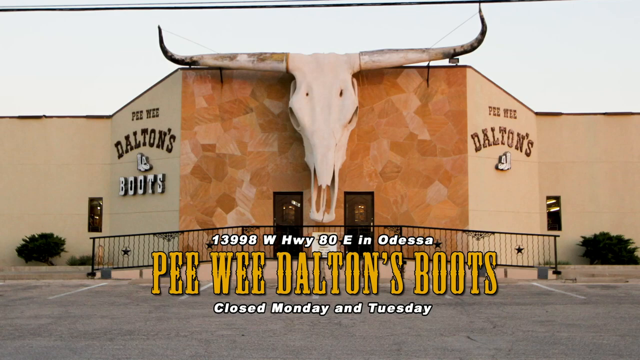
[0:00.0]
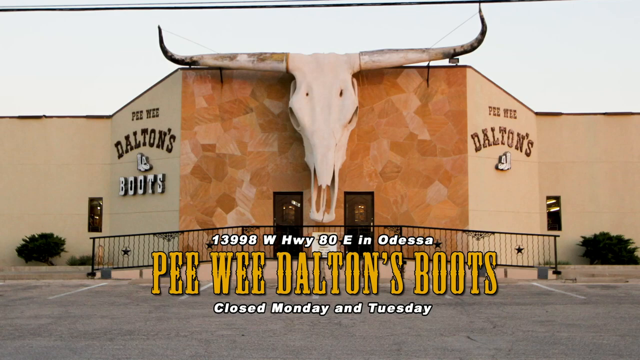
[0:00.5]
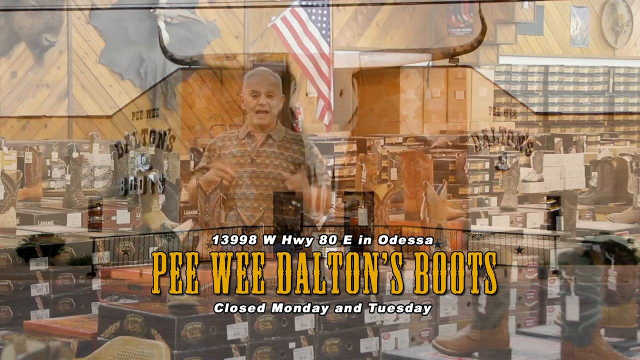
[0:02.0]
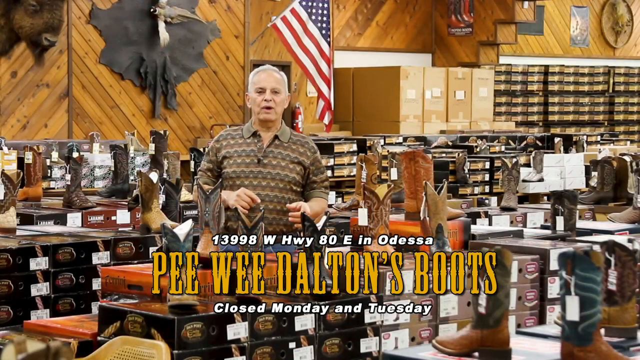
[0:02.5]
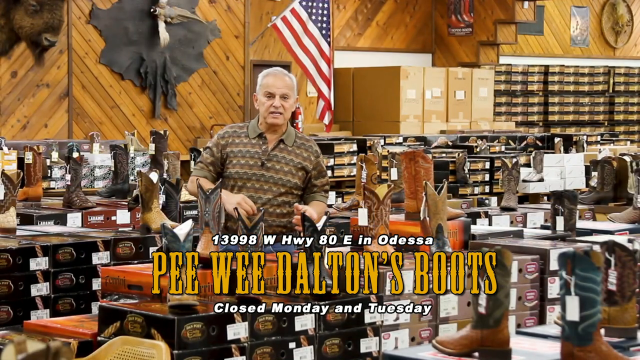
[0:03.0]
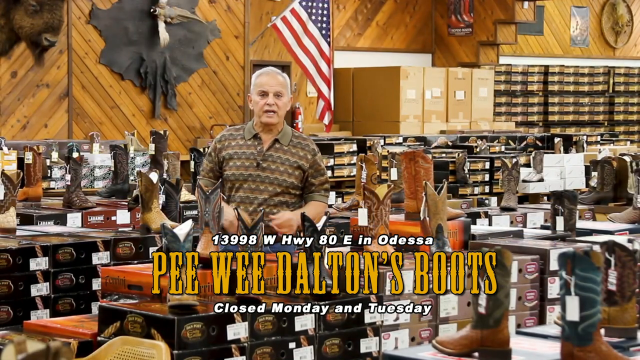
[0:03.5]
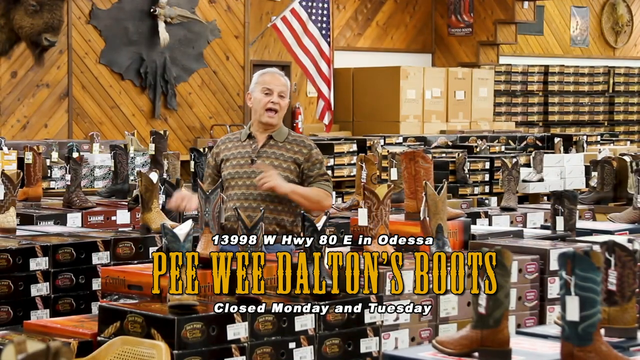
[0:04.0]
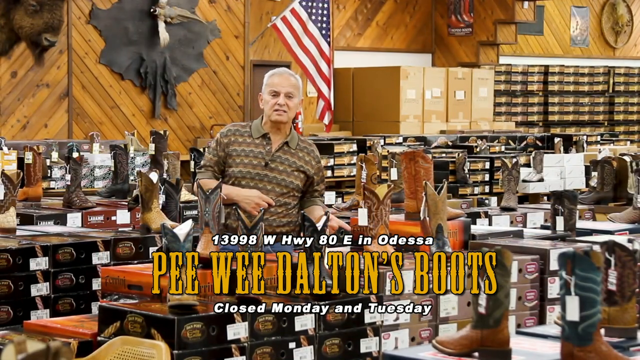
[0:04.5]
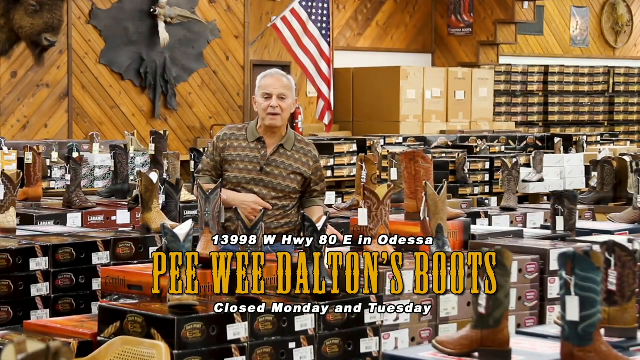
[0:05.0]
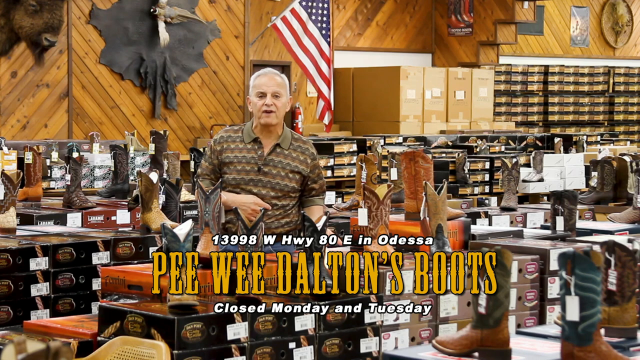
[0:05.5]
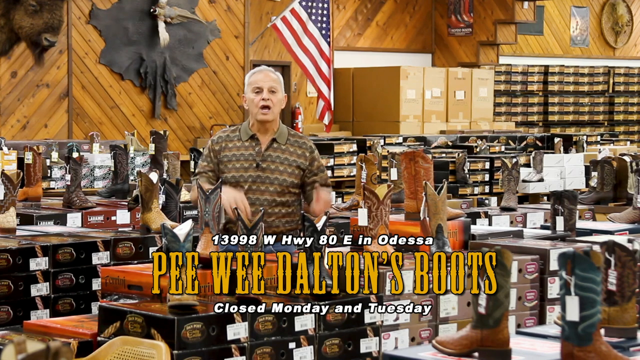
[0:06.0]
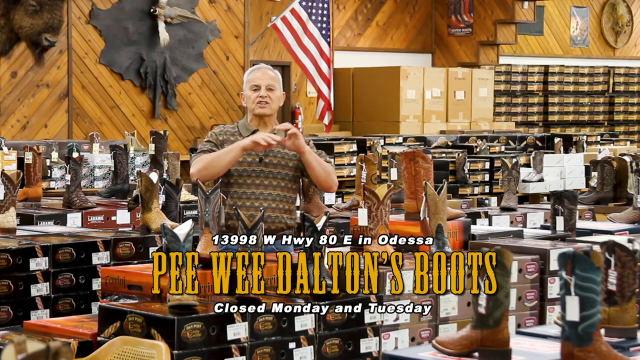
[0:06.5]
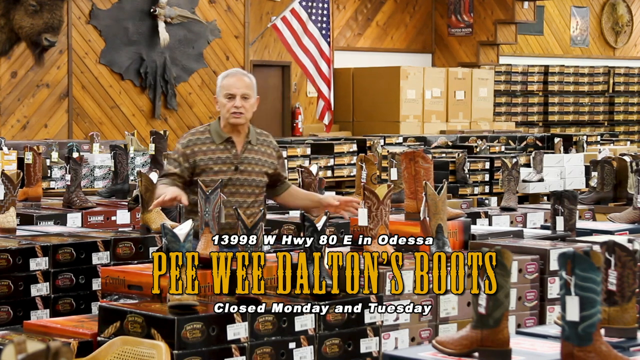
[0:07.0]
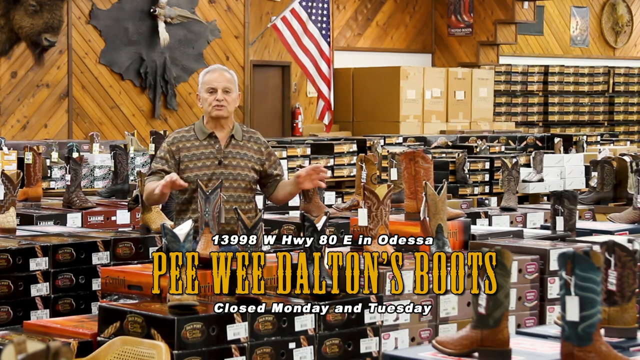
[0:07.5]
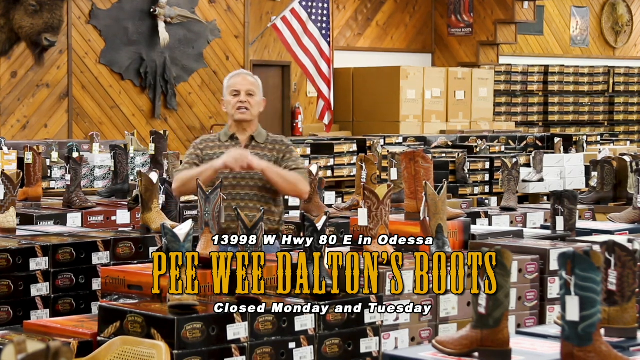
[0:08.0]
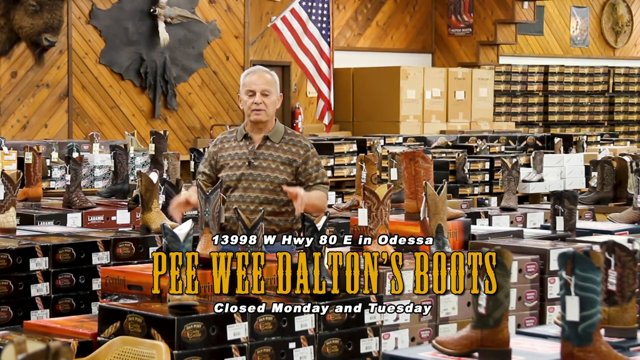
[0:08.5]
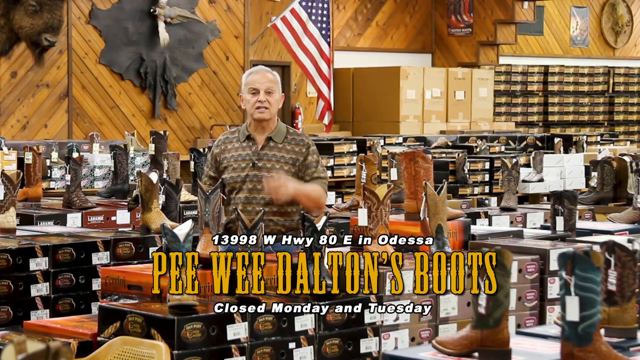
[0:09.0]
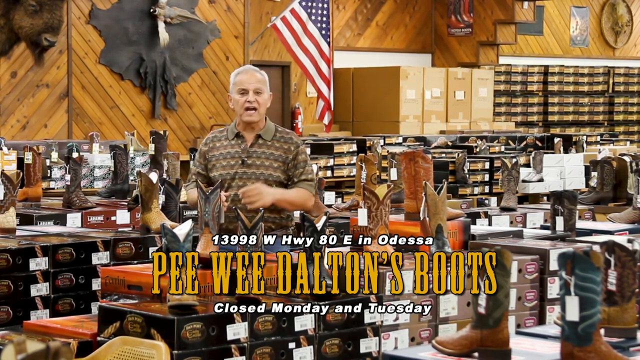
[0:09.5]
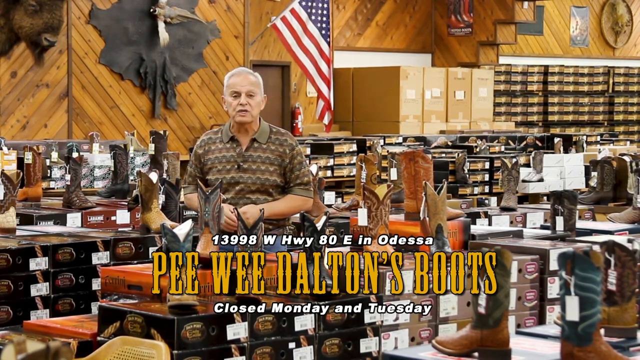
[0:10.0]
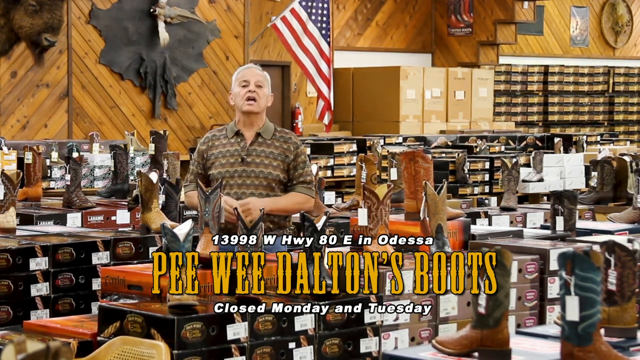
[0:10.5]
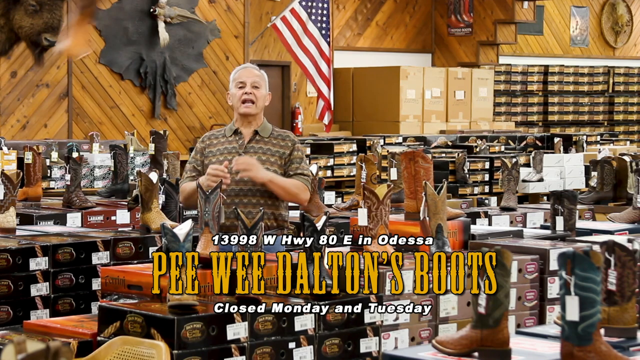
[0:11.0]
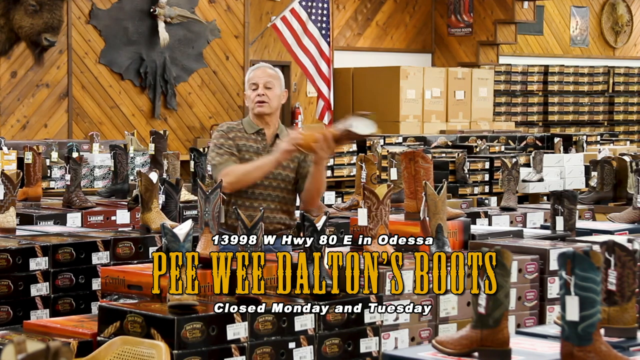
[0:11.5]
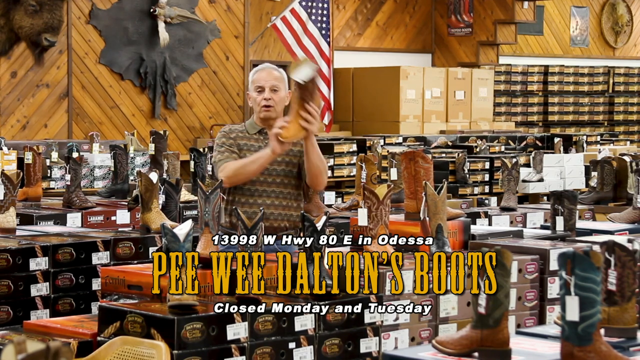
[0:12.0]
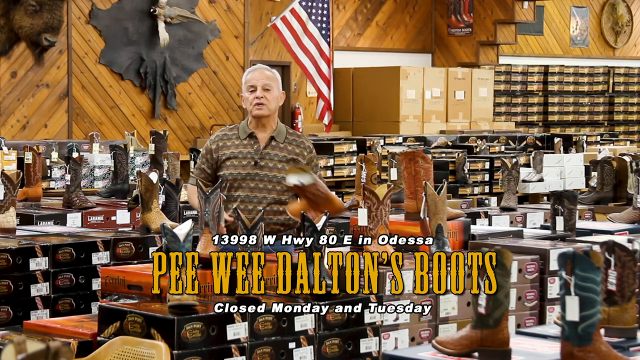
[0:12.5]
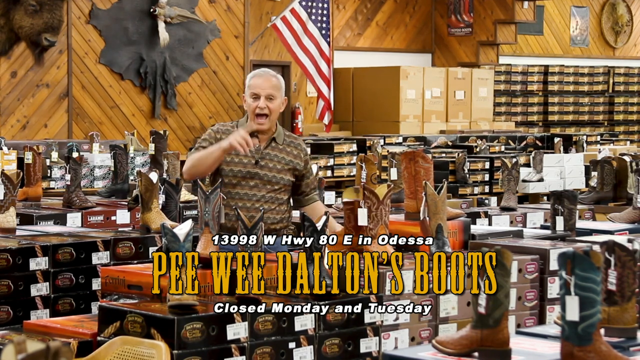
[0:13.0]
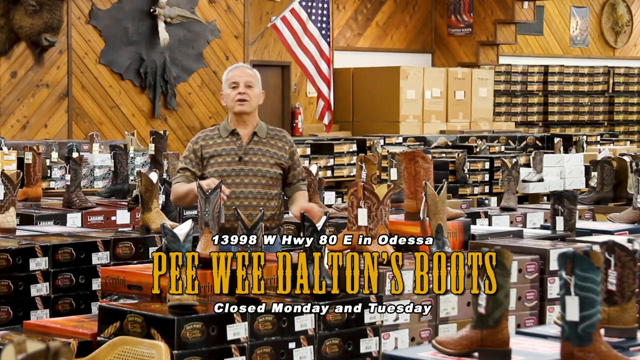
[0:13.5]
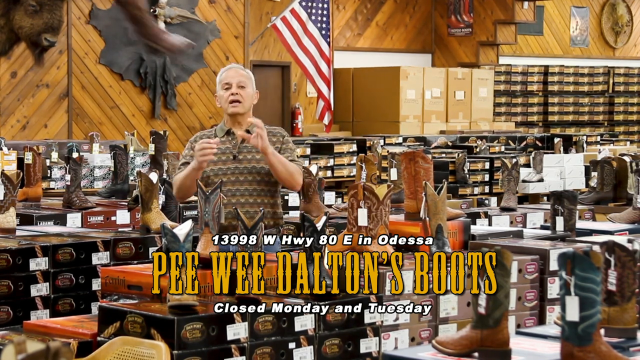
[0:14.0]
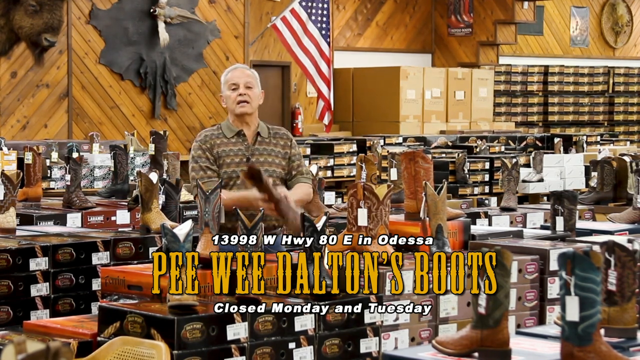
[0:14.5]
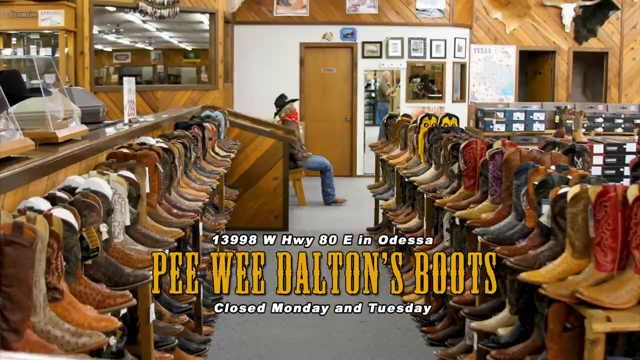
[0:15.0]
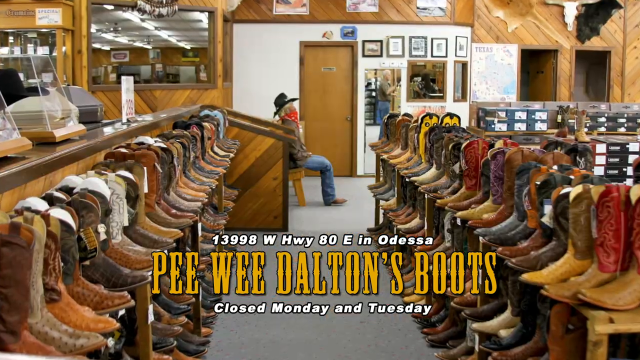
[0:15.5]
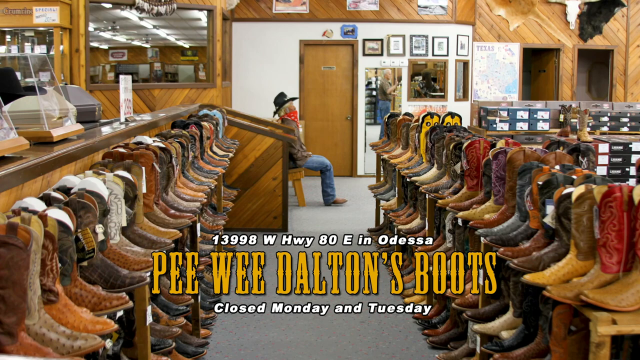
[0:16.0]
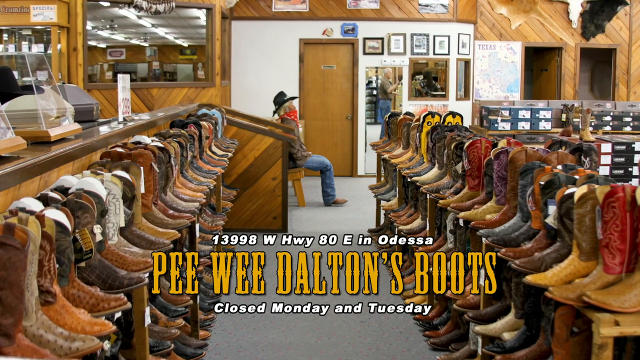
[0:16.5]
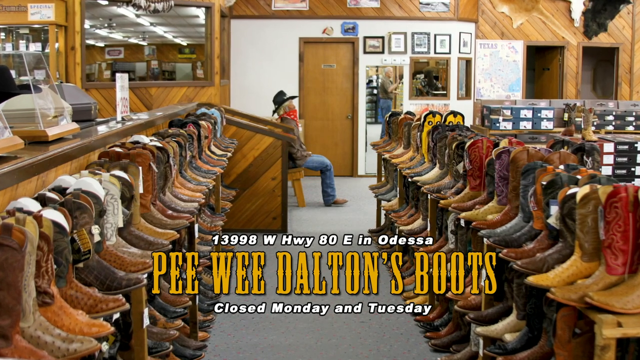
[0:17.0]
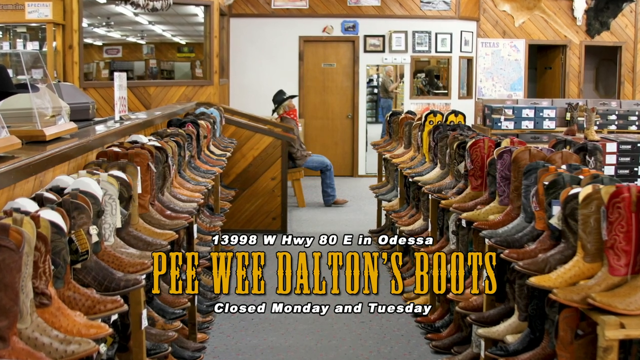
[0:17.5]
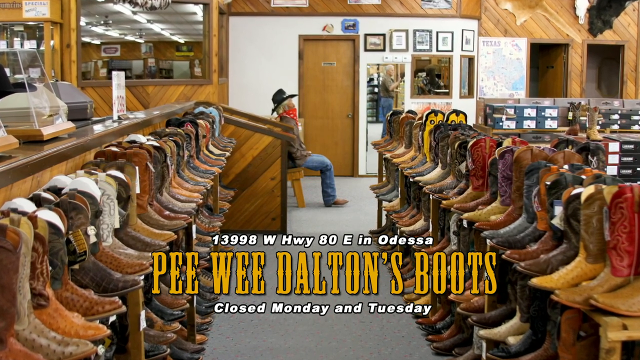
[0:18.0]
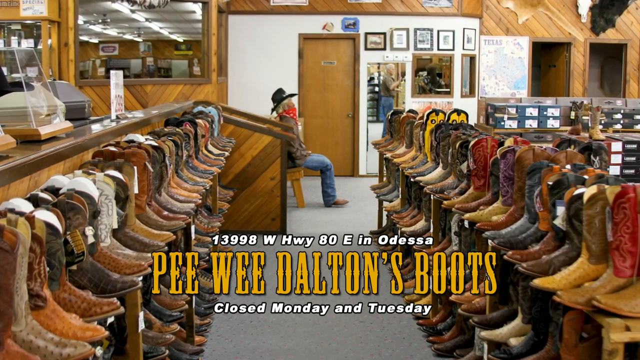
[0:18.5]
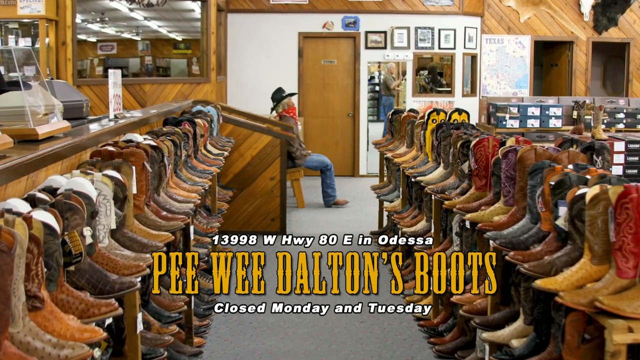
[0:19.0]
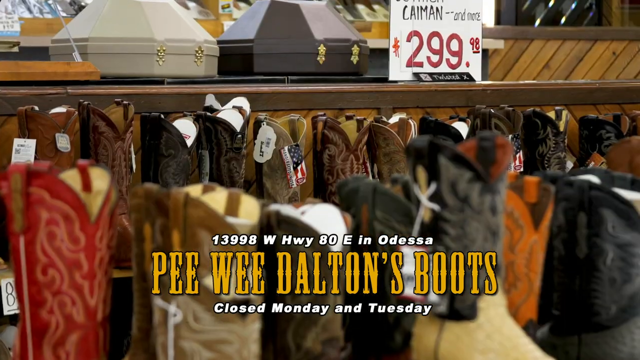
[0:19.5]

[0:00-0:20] The video is for Pee Wee Dalton's Boots at 13998 West Highway 80E in Odessa, closed Monday and Tuesday. On the very front of the building's exterior is something like an animal head with horns, like a bull head. Inside the store, a gentleman is surrounded by lots of boots, and an American flag is displayed. He wears a brownish short-sleeve polo shirt and talks while pointing at the boots, very animated. Someone tosses him one boot; he catches it and sets it down, and then they toss him another boot. Next comes a display of lots of boots on shelves, with a mannequin sitting in a chair wearing a cowboy hat, a scarf around its neck, jeans and cowboy boots. A very quick look at more boots follows: red, orange, black and gray, black and brown boots of all different kinds on display. Some have price tags on them and some don't, and the prices are hard to make out.